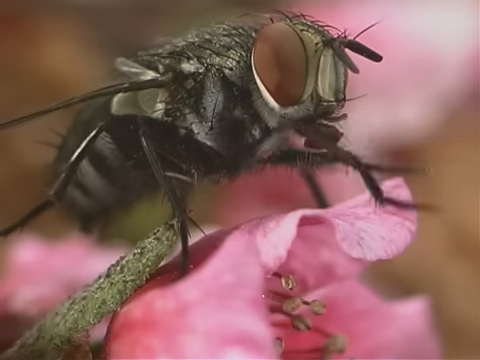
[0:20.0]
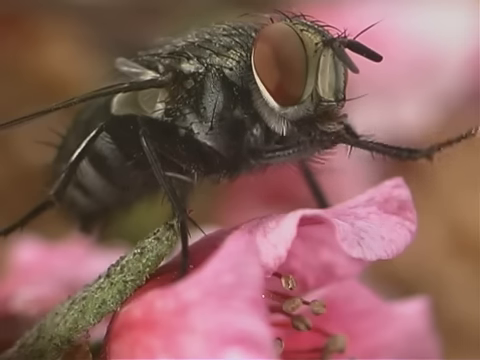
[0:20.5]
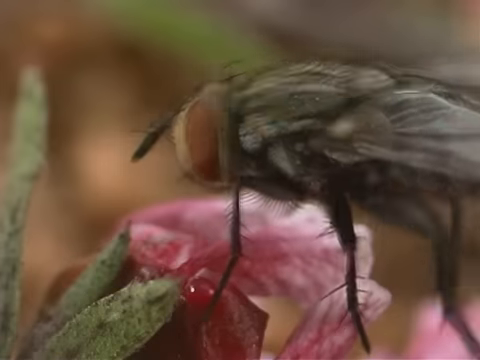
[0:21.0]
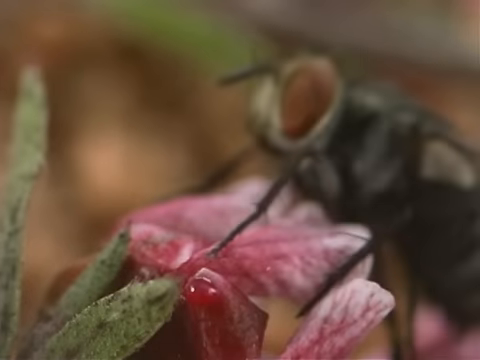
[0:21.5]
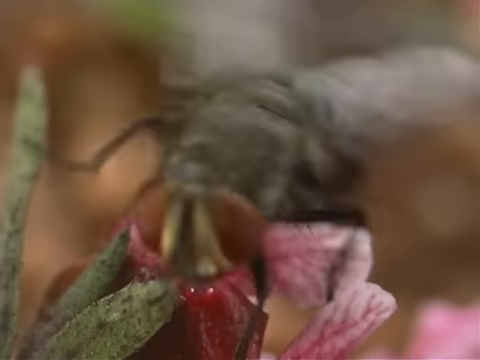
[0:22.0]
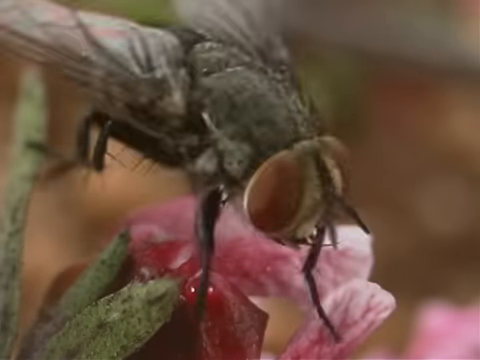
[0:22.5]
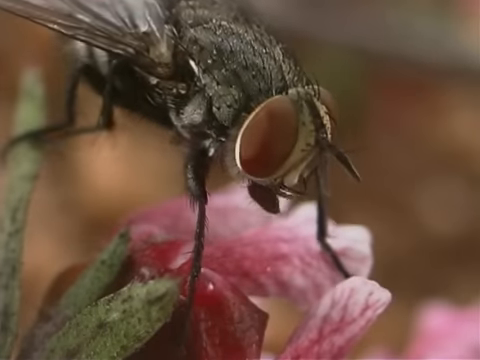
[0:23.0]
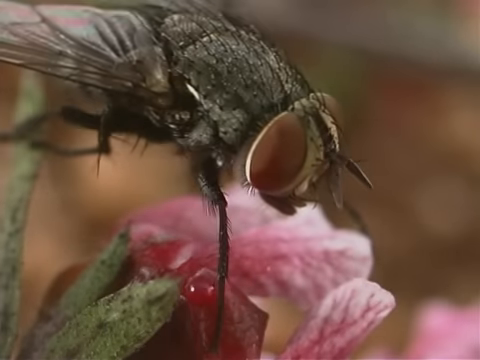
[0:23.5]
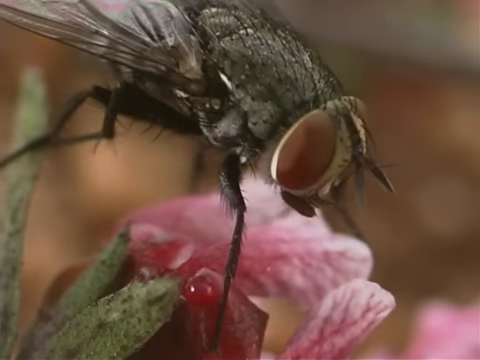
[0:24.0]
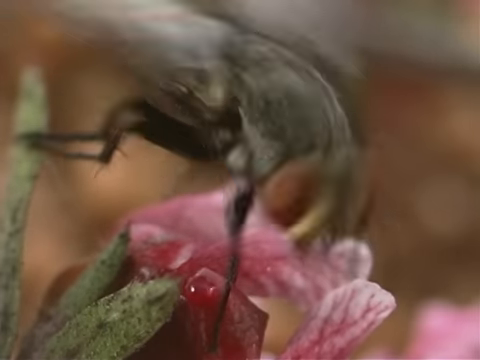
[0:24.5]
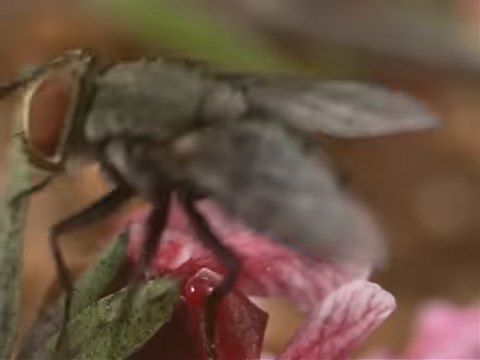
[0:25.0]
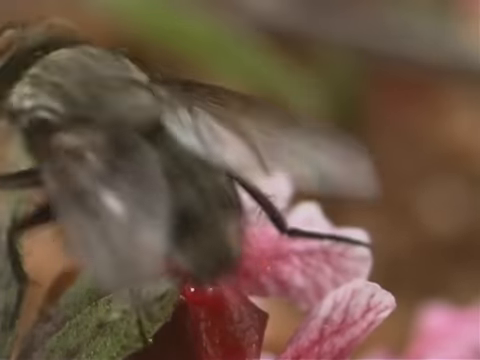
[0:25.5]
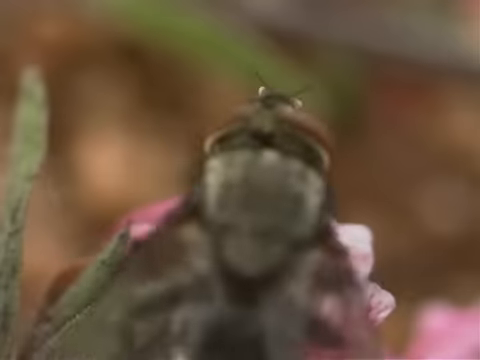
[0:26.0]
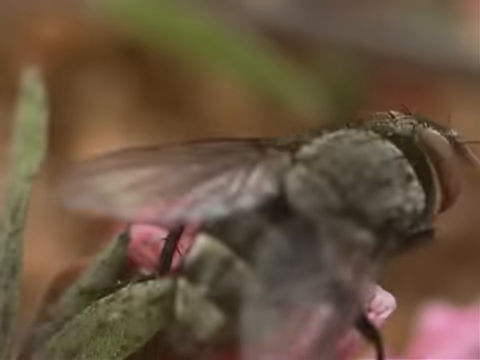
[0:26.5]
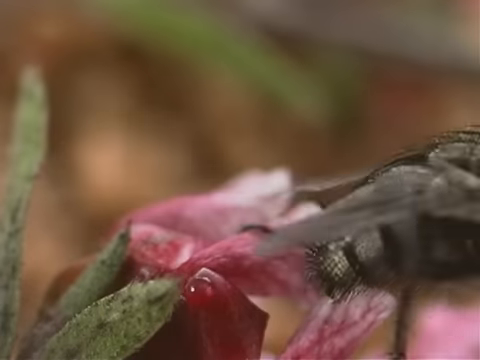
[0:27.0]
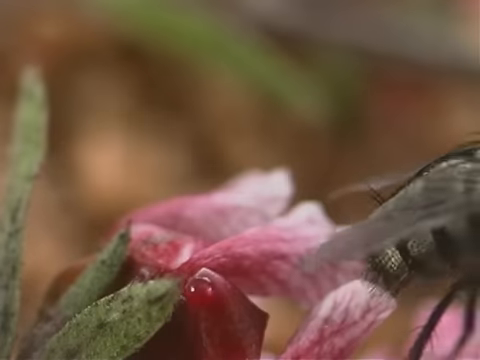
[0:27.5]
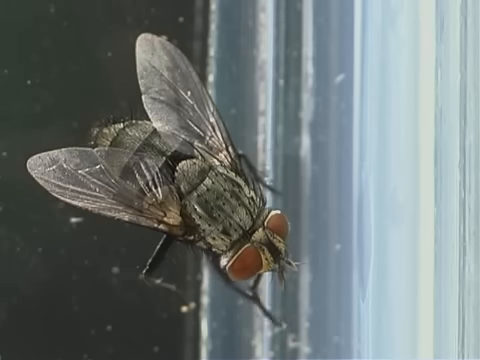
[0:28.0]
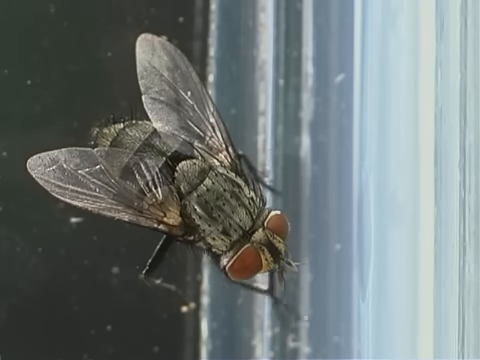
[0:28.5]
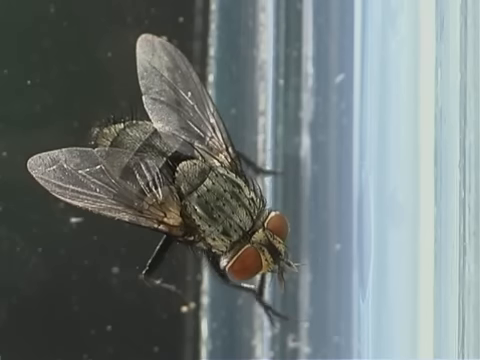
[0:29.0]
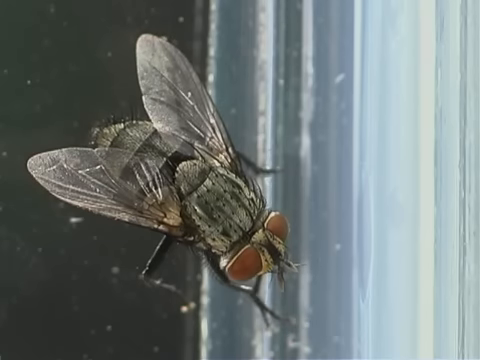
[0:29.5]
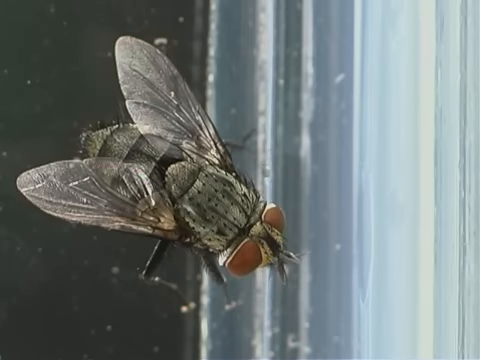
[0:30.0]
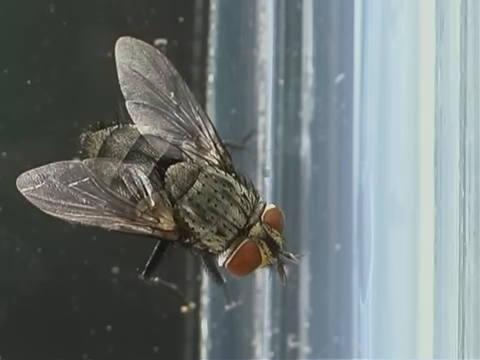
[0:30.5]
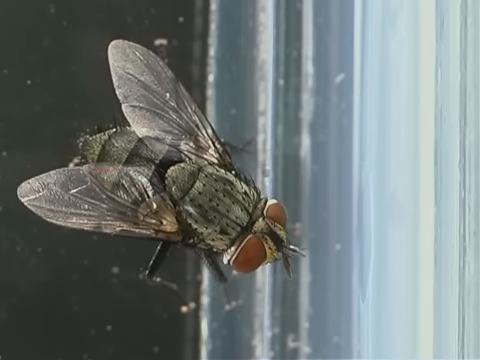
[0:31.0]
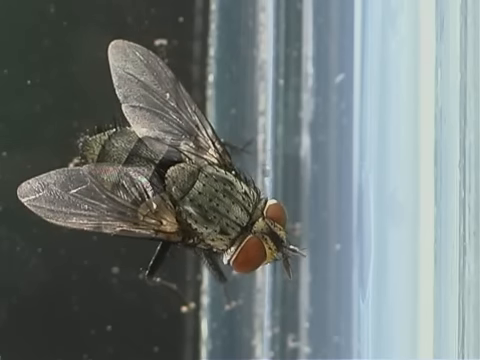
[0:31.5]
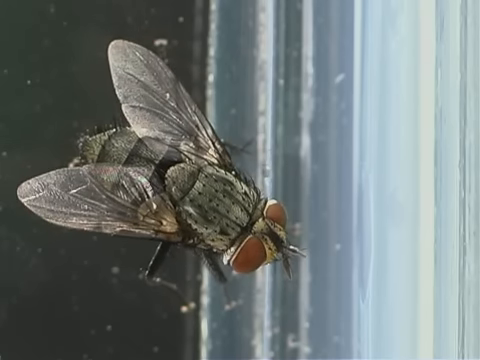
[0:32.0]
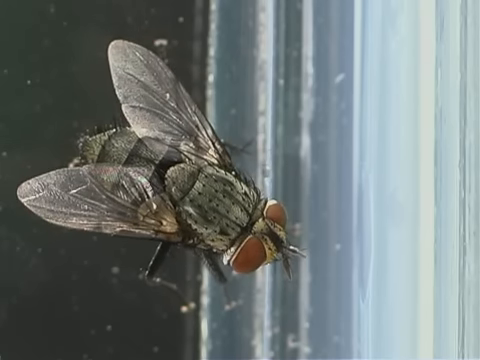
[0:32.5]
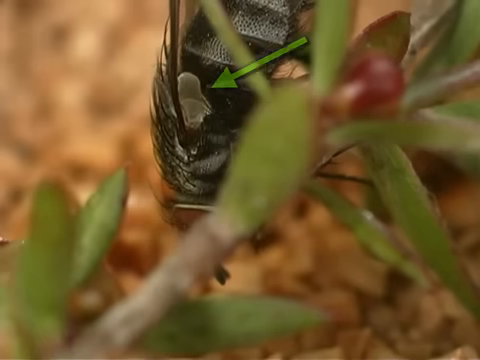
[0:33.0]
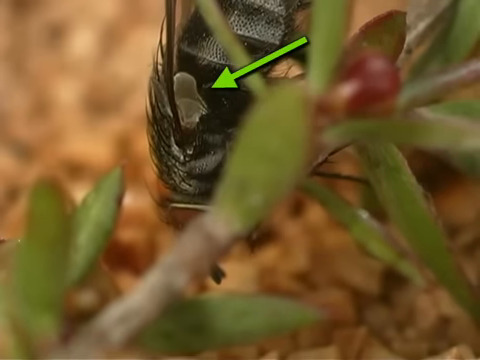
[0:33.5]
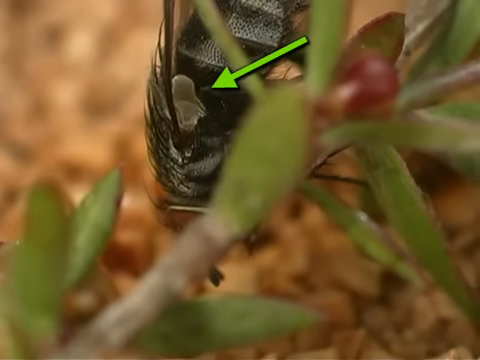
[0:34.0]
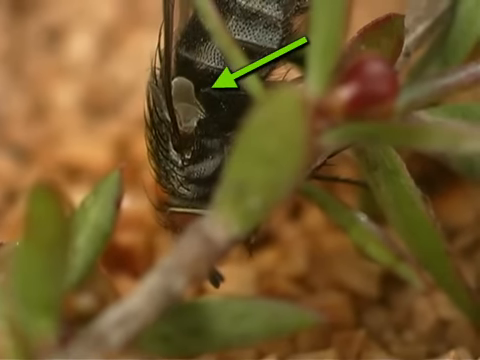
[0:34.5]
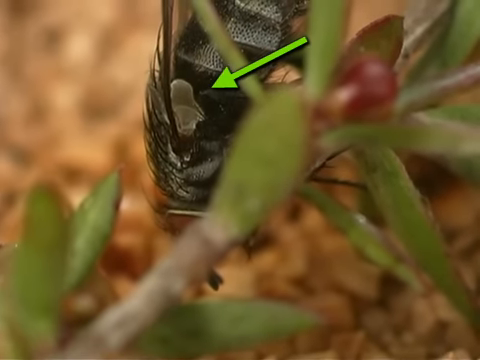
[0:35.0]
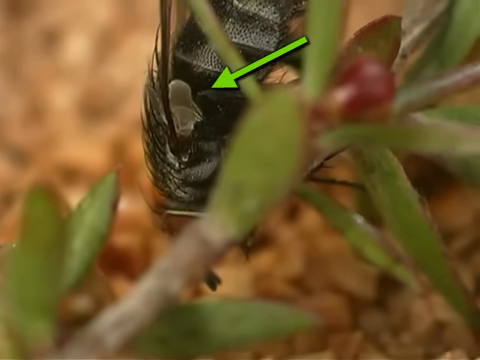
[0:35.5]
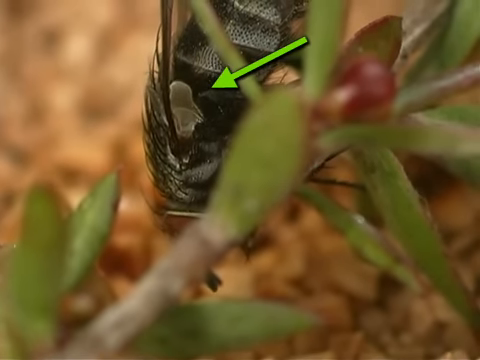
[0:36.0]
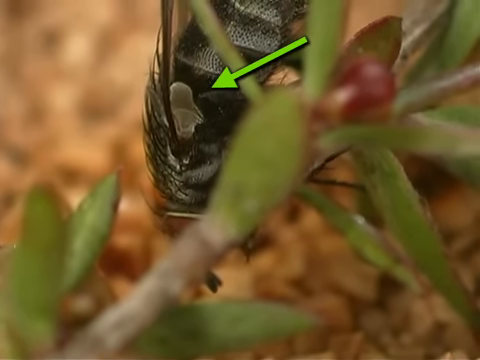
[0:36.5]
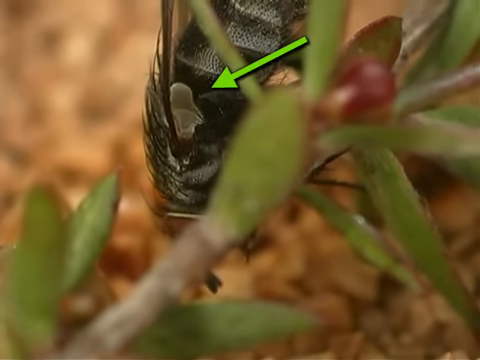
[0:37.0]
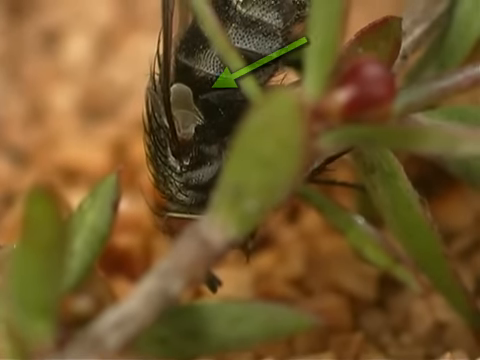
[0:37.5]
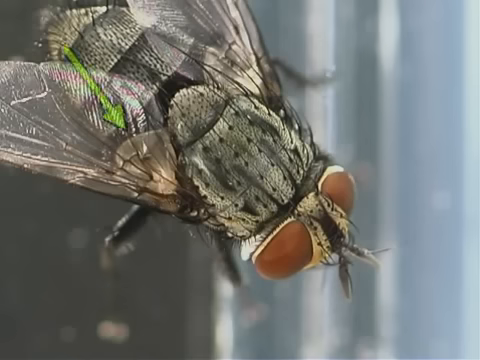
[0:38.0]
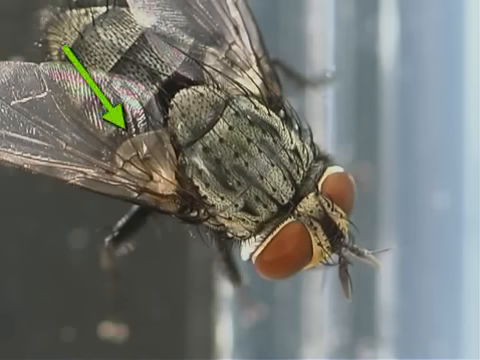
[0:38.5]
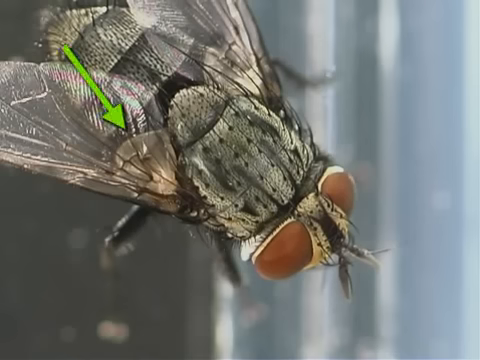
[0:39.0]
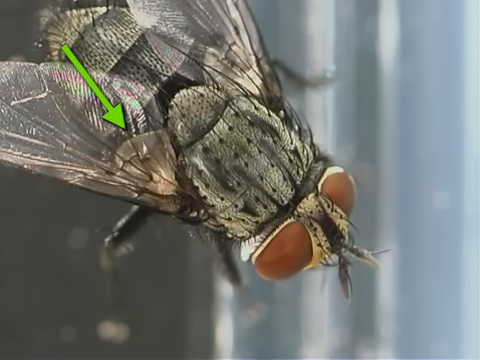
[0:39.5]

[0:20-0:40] The fly is still on the pink flower. To the left of the flower, some green stalk-like things come up at the bottom left of the frame. The fly moves left to right in a sort of circle, spinning around while using its legs to support itself on the green stalk and using its front legs to turn right around. It makes a quick movement right to left, then back in the other direction. Its wings and legs are visible, and then it suddenly moves off to the right and disappears completely. The video then moves to a fly sitting on a window. Its two transparent wings, three body parts, legs and bright orange eyes are clearly visible. There are black dots on its back, which is a light green colour, and there are three sections to the back of its body. It rubs its two front legs together very fast. Next, another fly sits on a flower or some leaves, and a big luminous green arrow points to part of the fly, which looks like it could be underneath its wing or the left-hand side of its body.